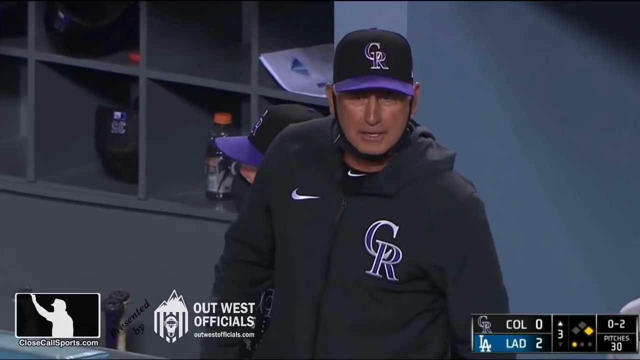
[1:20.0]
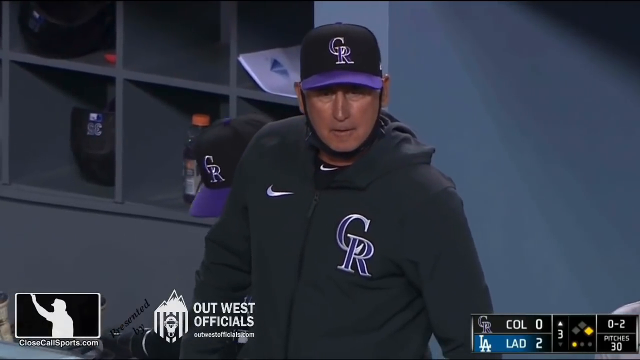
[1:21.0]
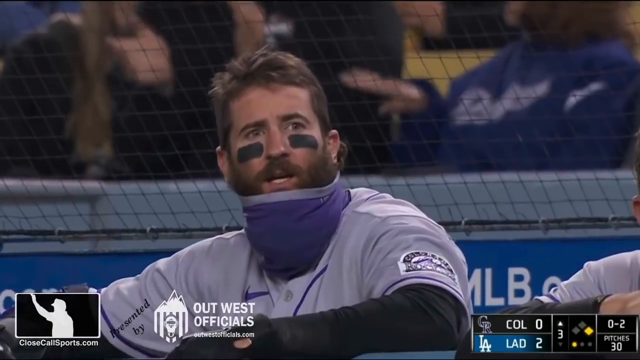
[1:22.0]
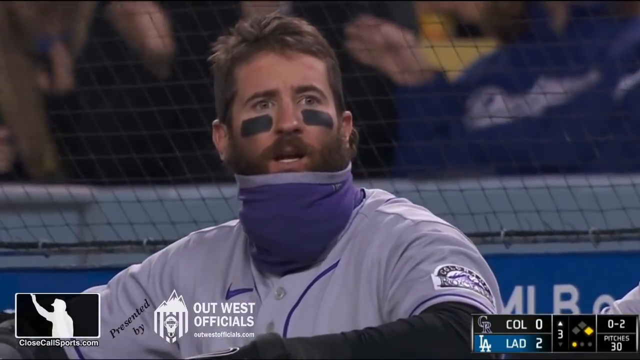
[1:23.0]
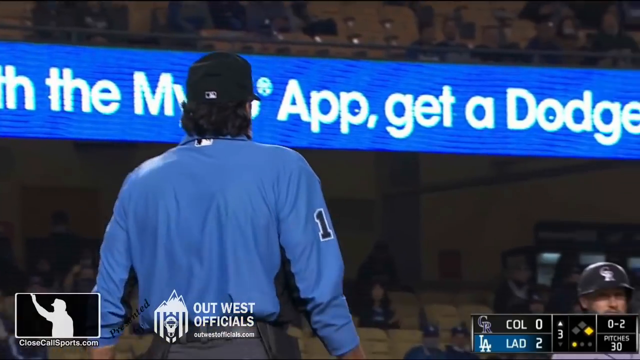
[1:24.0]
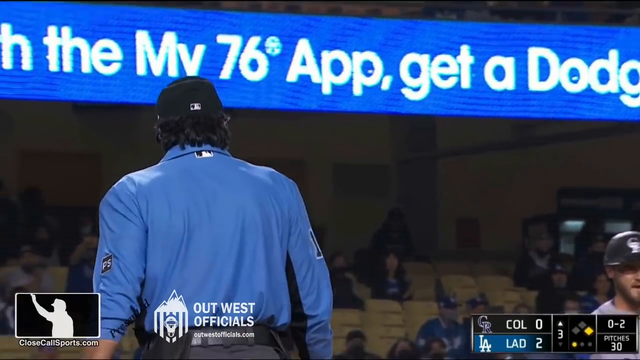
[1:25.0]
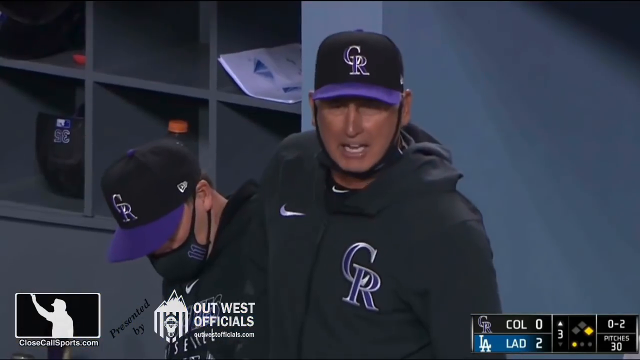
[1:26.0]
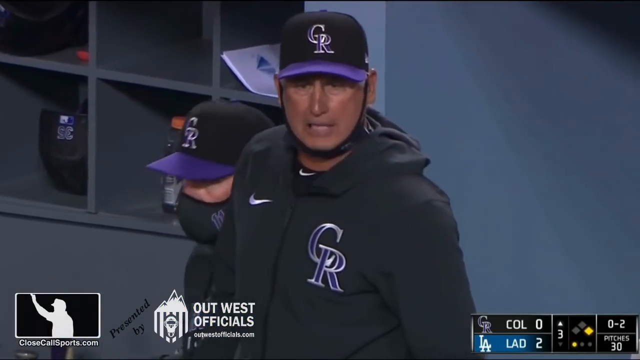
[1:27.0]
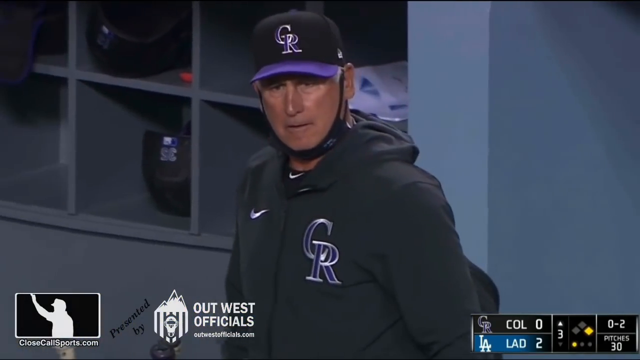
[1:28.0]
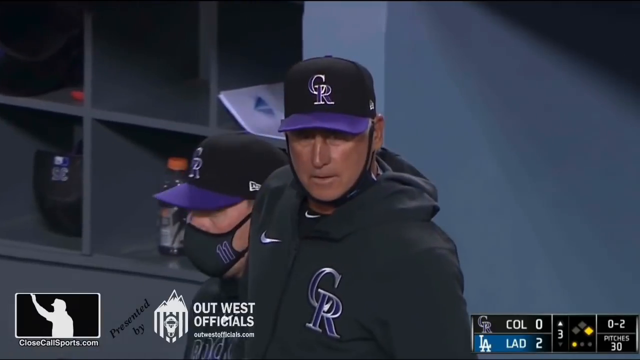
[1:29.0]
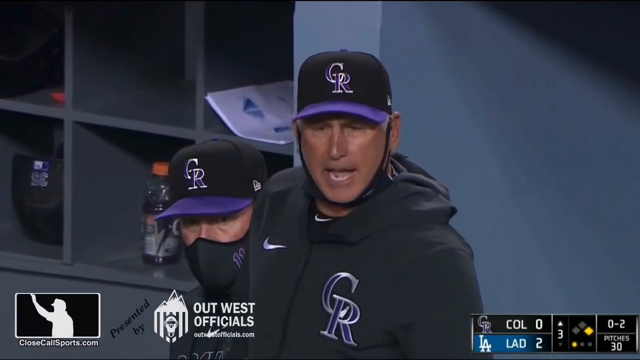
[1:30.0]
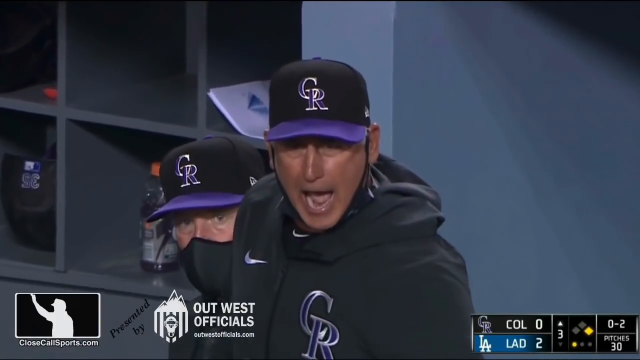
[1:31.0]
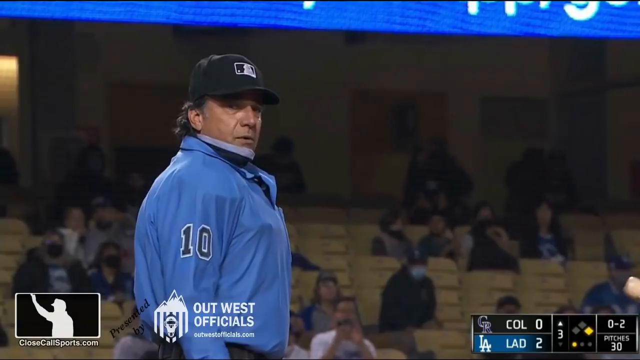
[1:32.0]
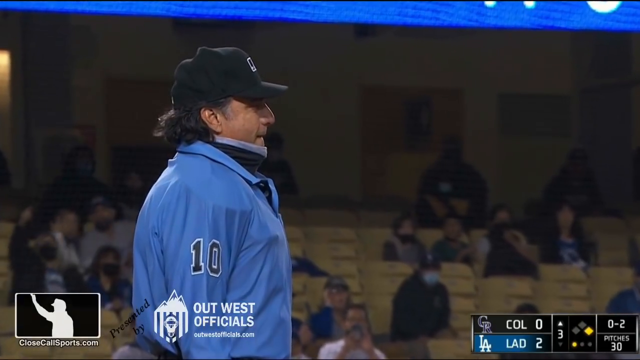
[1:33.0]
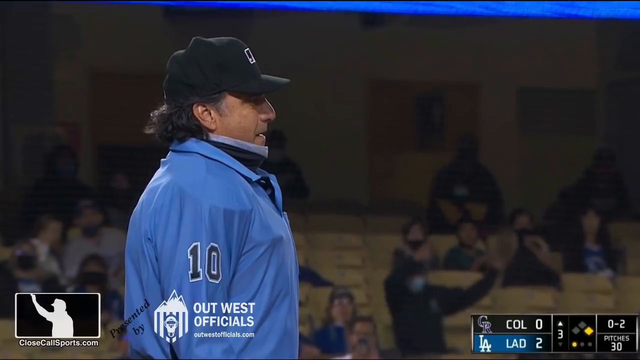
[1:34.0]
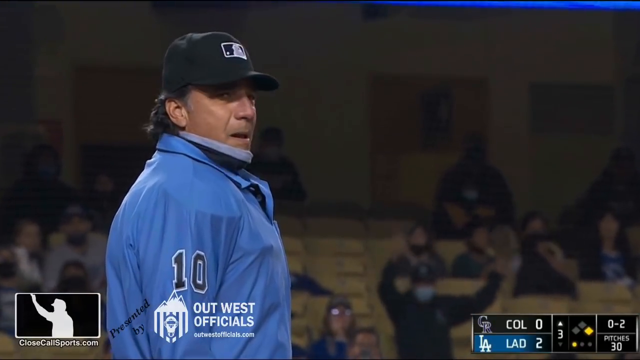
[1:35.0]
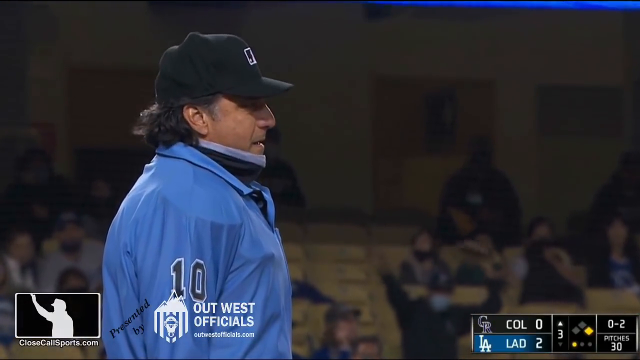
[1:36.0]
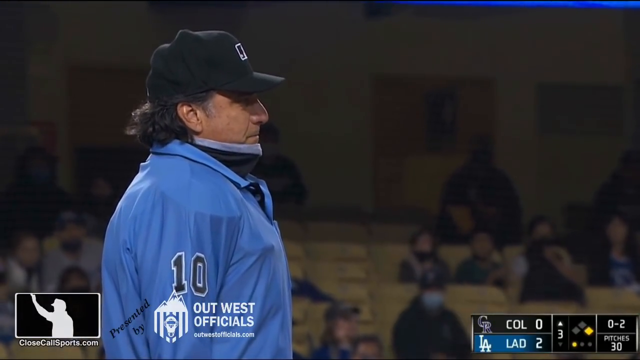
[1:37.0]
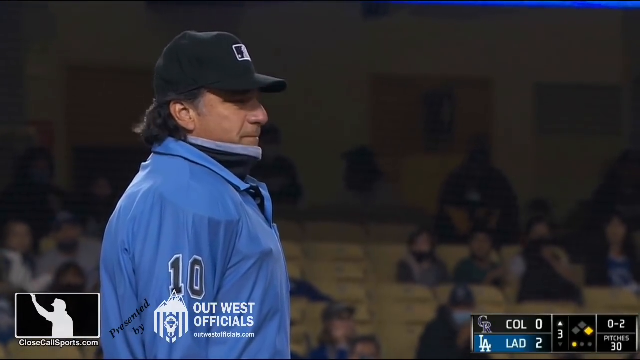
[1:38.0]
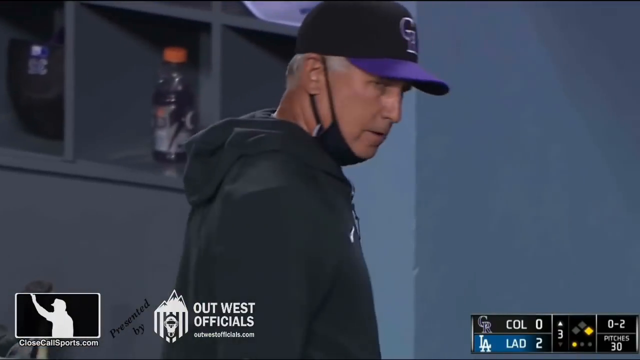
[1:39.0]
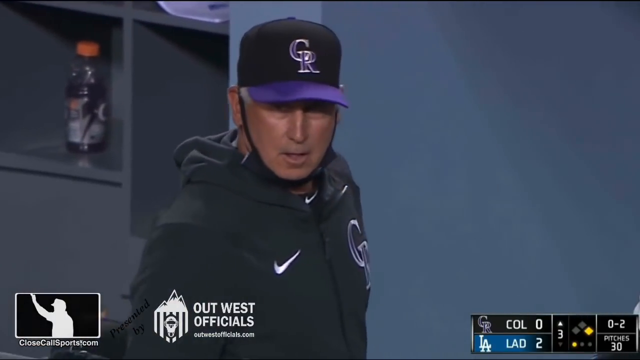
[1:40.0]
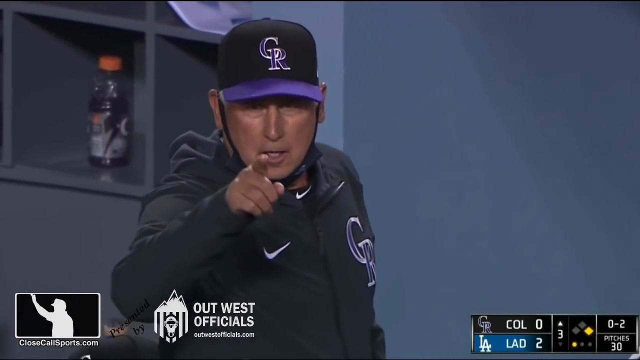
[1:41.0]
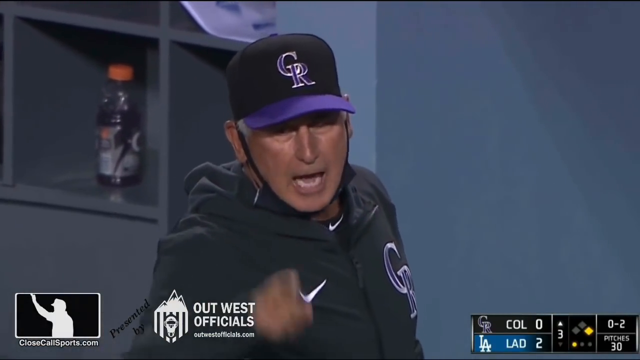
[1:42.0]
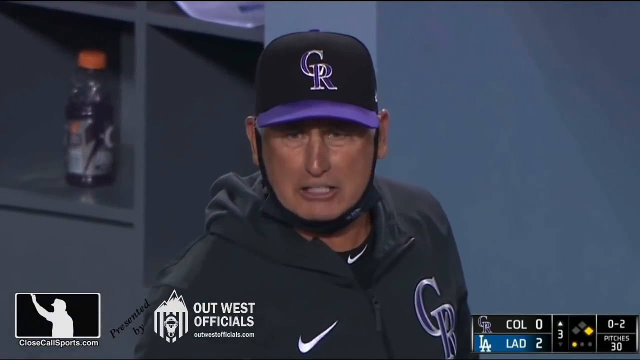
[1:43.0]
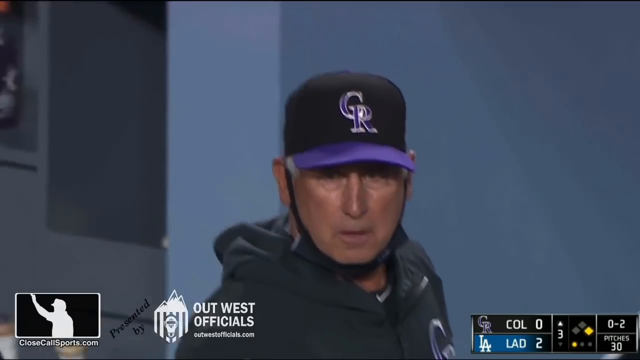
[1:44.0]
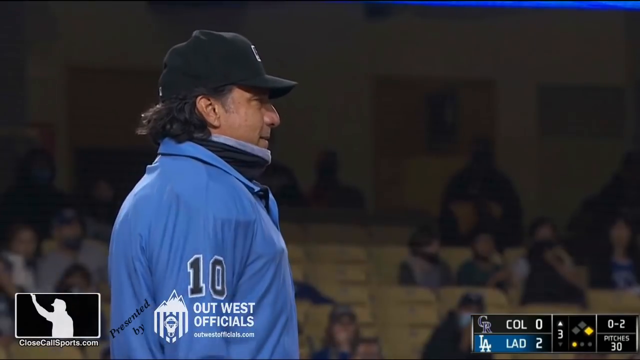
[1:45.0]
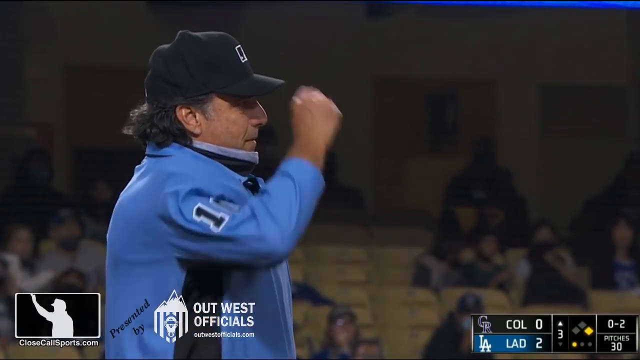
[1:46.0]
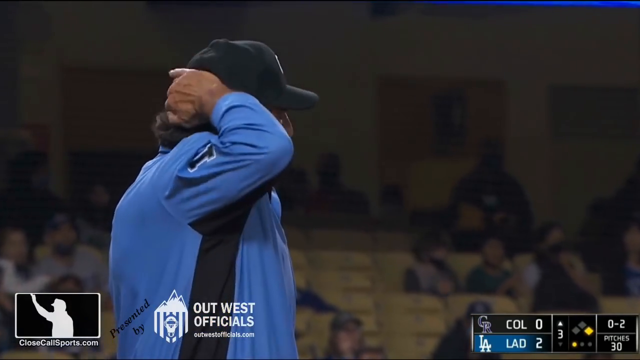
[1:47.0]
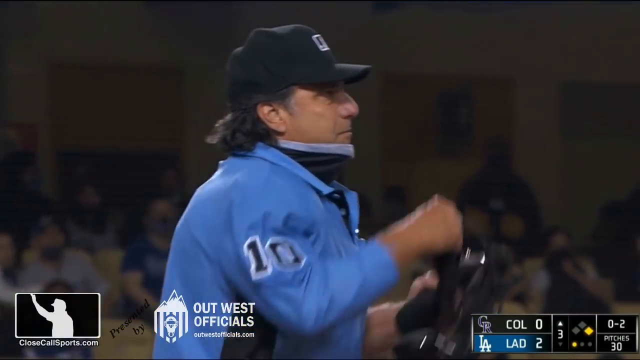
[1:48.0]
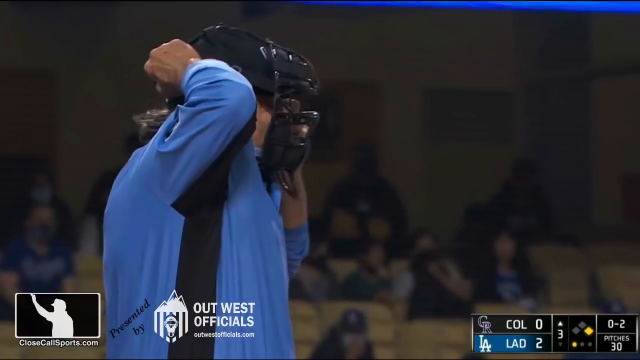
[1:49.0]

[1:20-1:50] The Colorado Rockies manager has just been ejected from the game. The camera pans around to reactions from players, who look a little in disbelief, while the umpire walks back toward home plate after removing his mask. A bright blue marquee is at the top of the screen. The Rockies manager still has not left the dugout and is extremely angry, pointing and screaming. The umpire puts his mask on, and the Rockies manager walks back in disbelief.